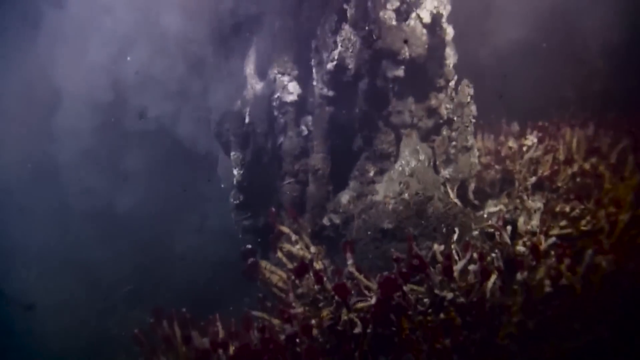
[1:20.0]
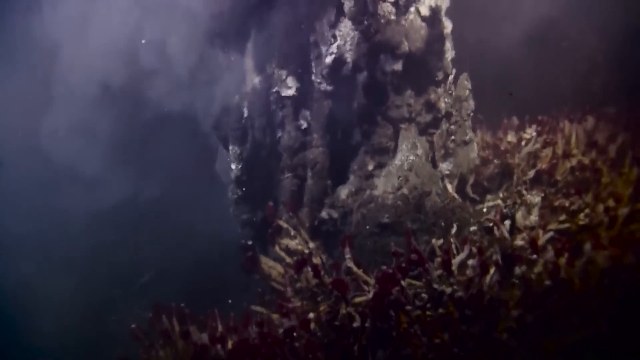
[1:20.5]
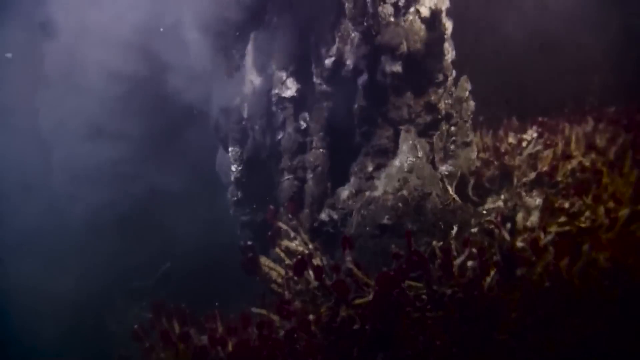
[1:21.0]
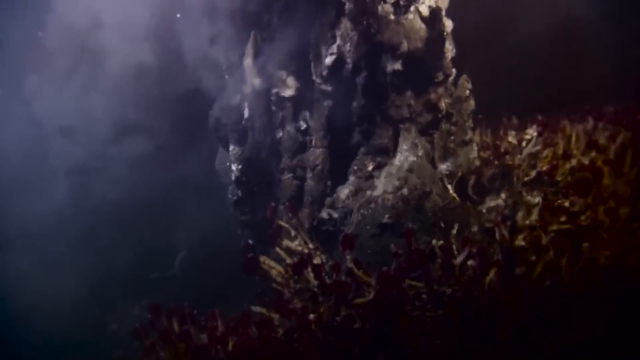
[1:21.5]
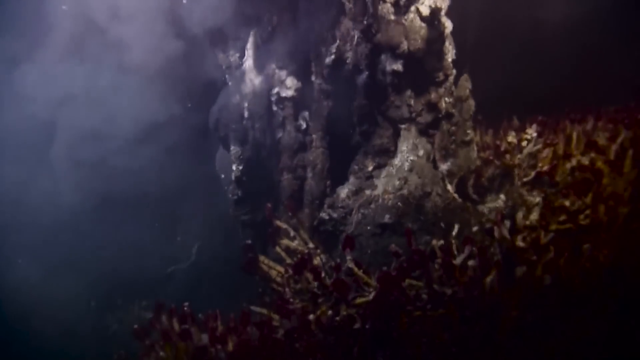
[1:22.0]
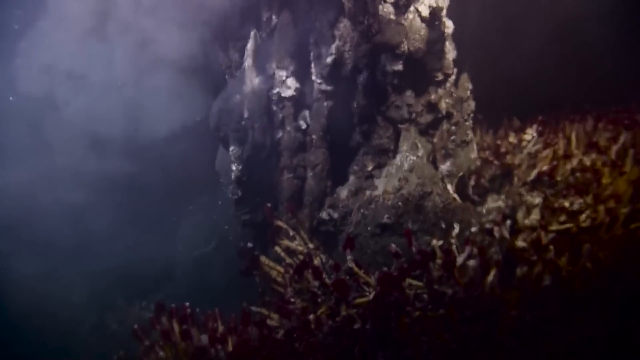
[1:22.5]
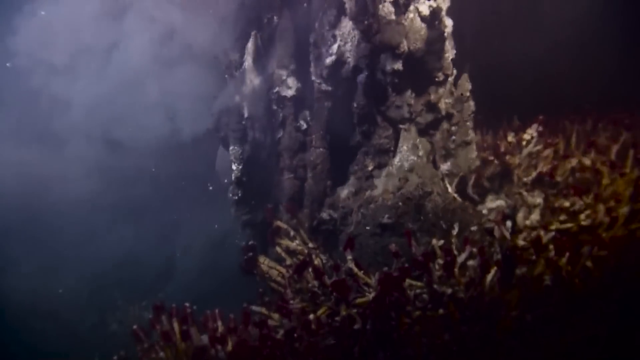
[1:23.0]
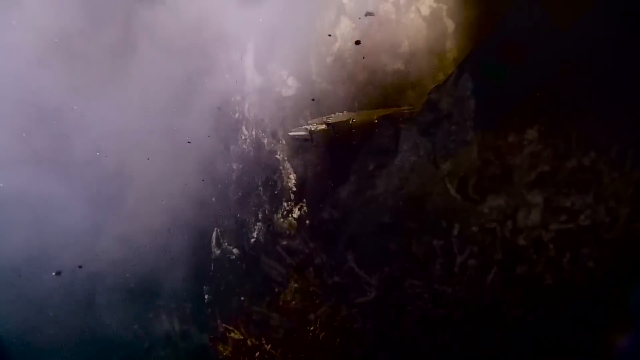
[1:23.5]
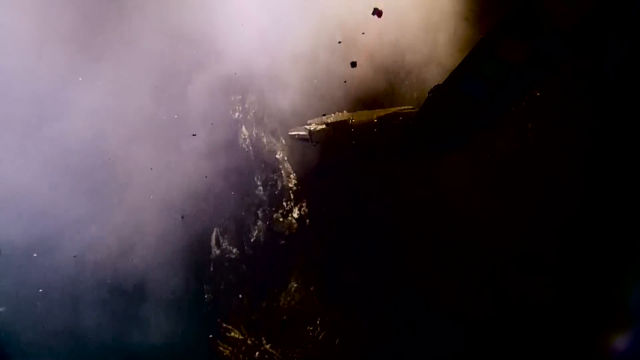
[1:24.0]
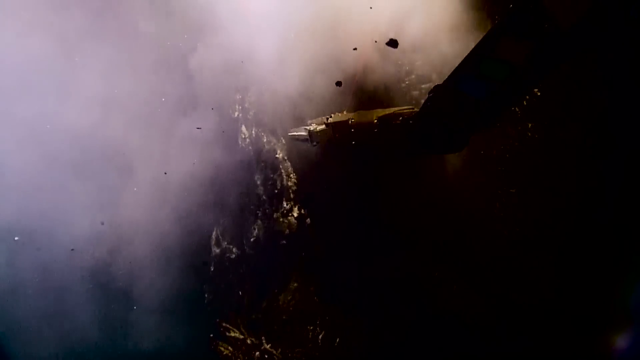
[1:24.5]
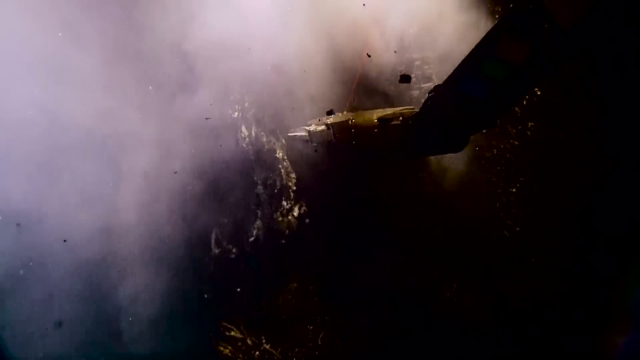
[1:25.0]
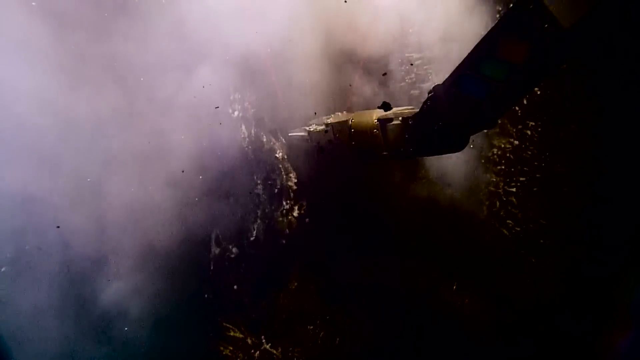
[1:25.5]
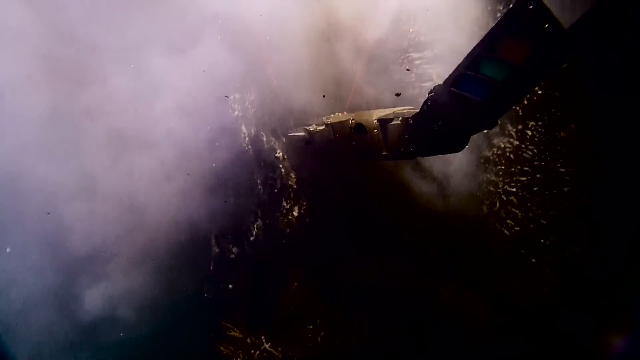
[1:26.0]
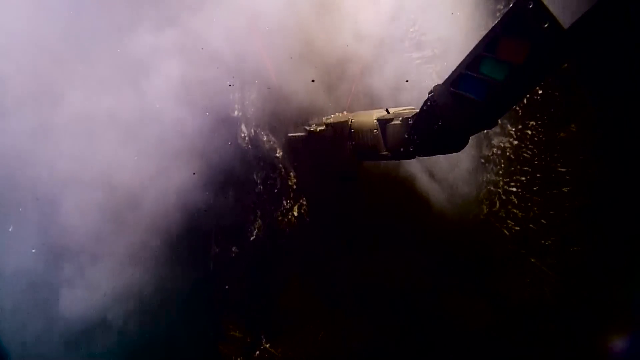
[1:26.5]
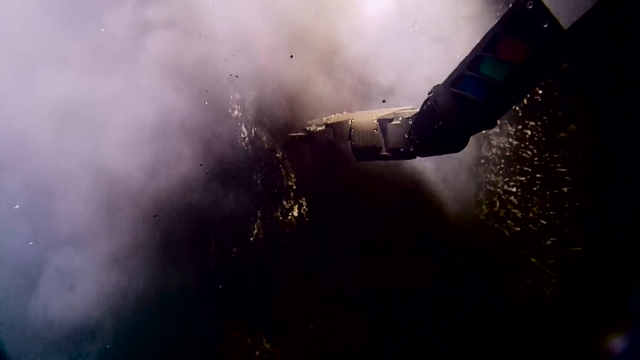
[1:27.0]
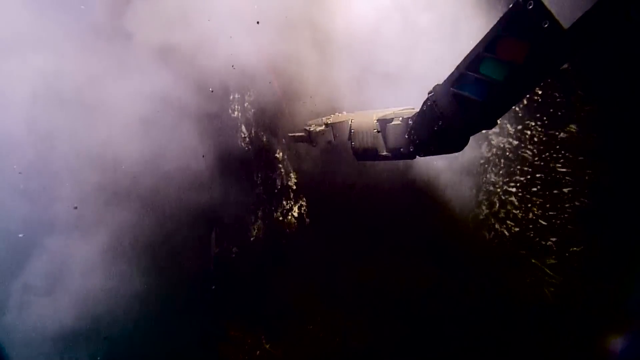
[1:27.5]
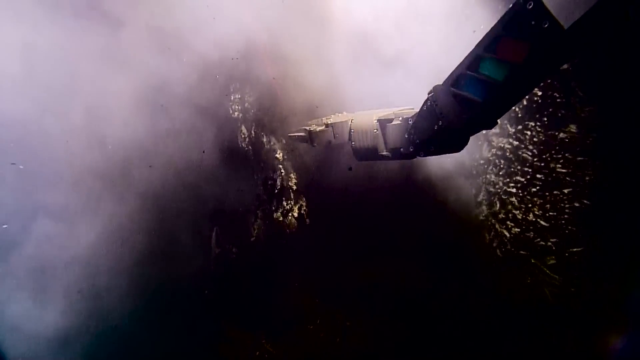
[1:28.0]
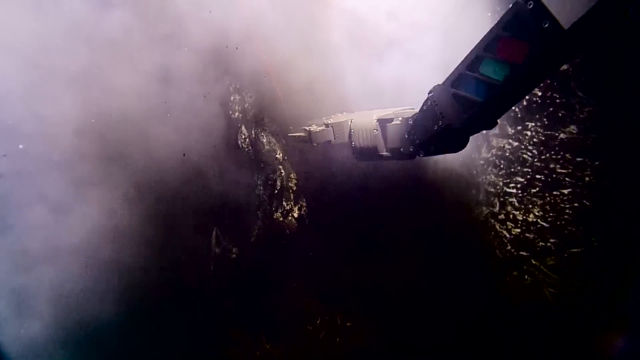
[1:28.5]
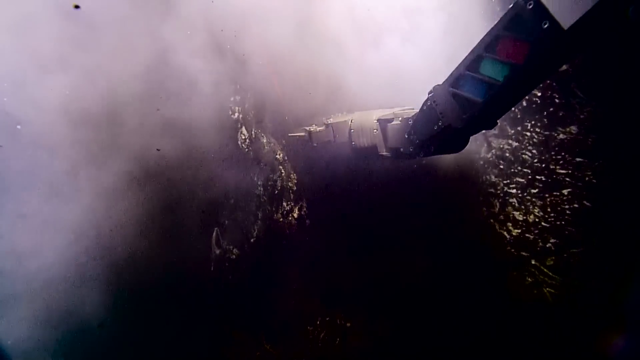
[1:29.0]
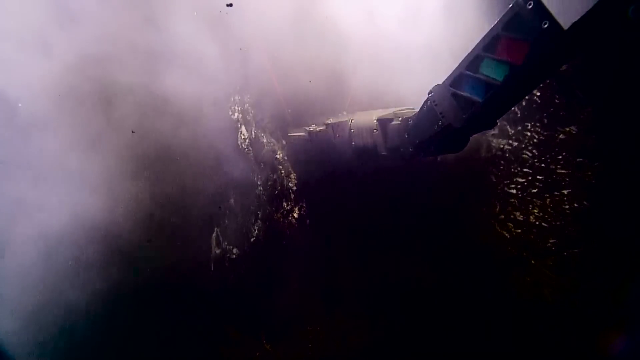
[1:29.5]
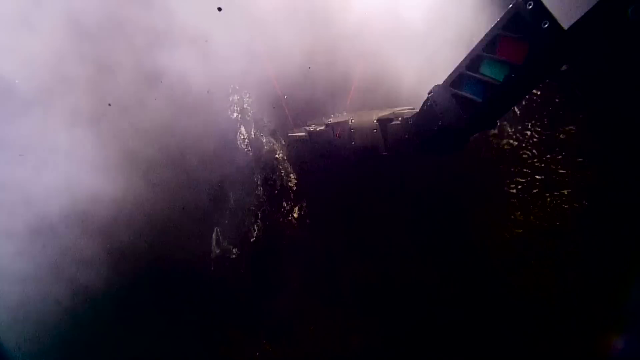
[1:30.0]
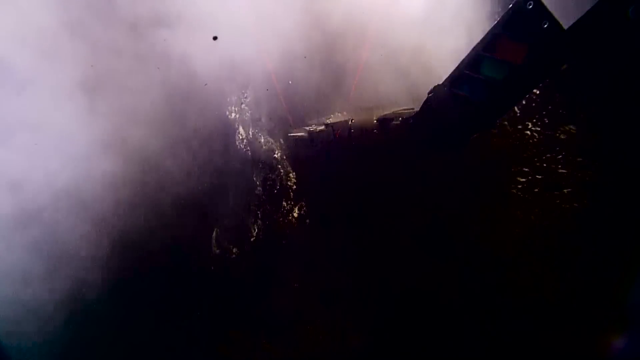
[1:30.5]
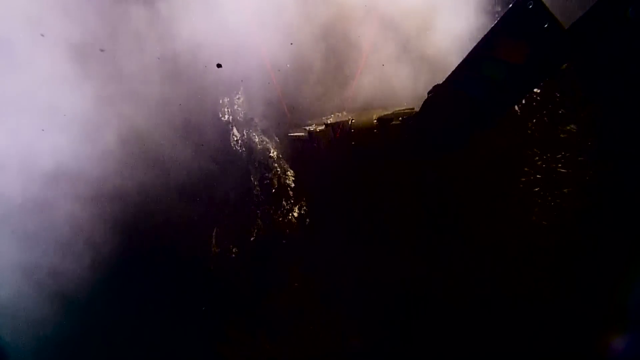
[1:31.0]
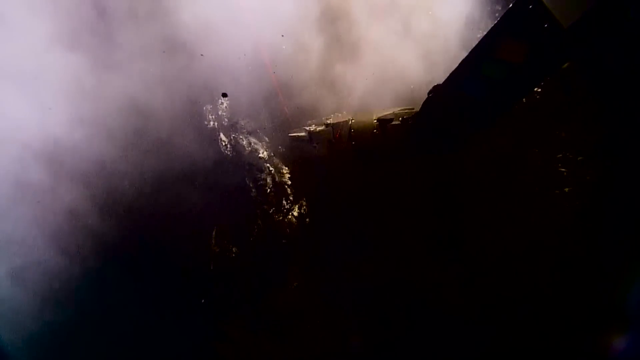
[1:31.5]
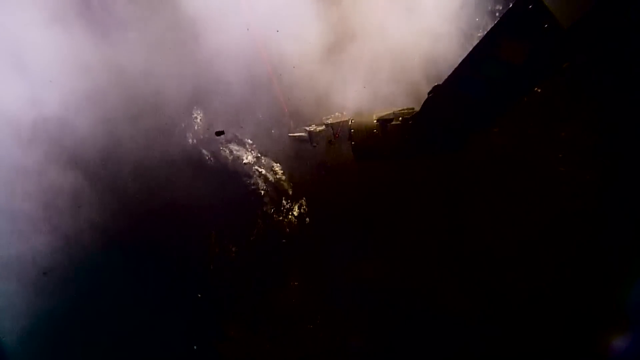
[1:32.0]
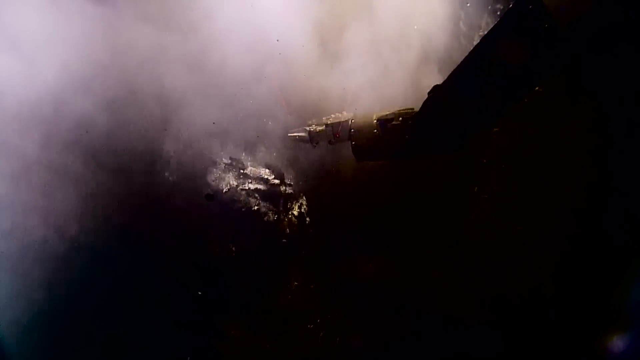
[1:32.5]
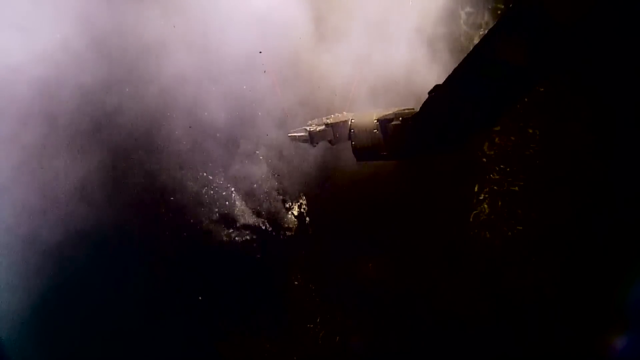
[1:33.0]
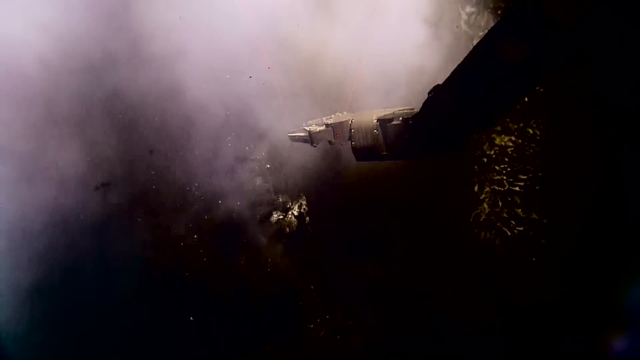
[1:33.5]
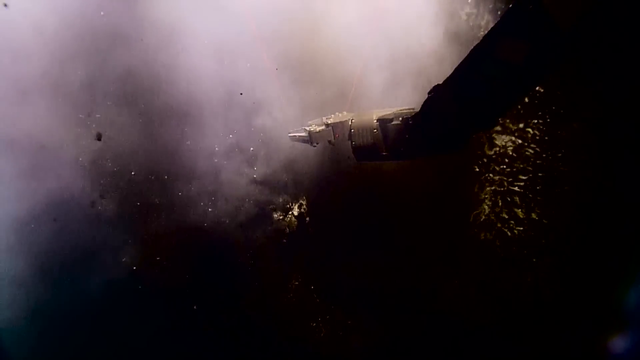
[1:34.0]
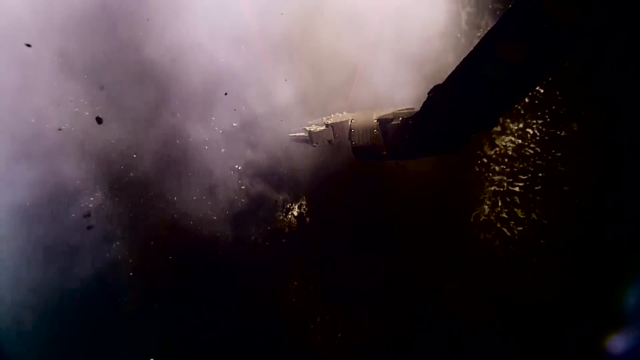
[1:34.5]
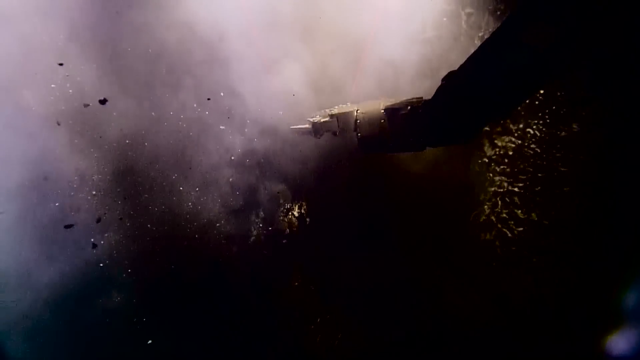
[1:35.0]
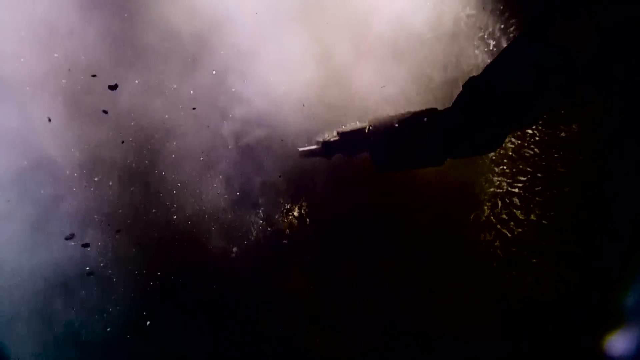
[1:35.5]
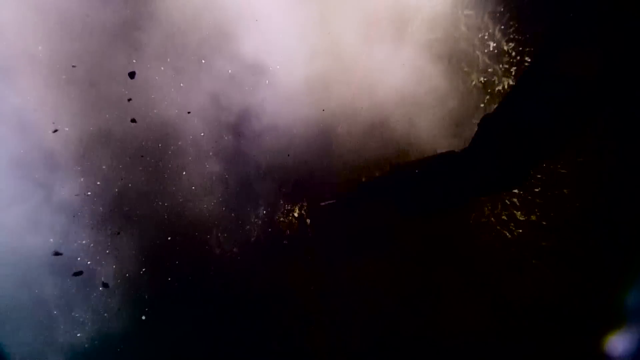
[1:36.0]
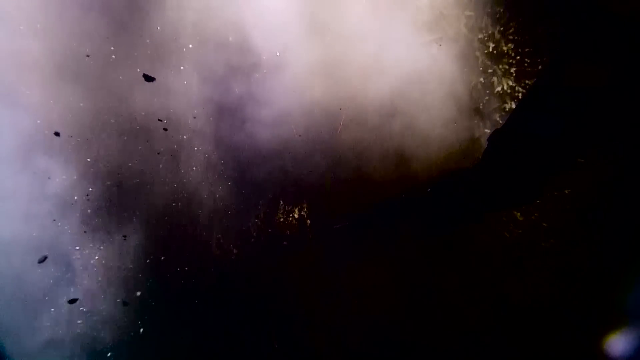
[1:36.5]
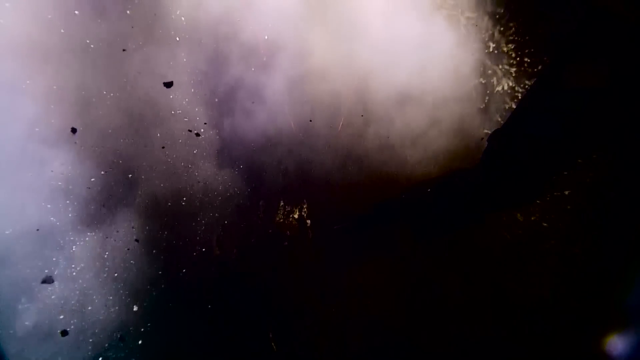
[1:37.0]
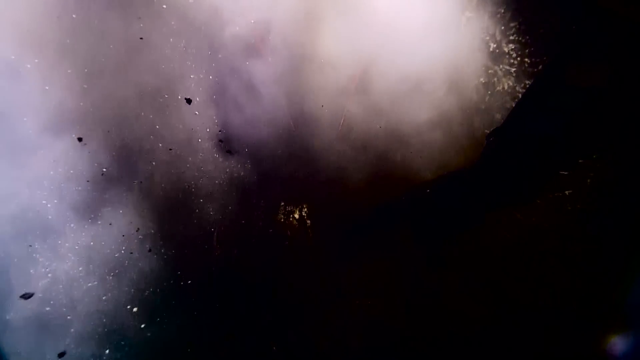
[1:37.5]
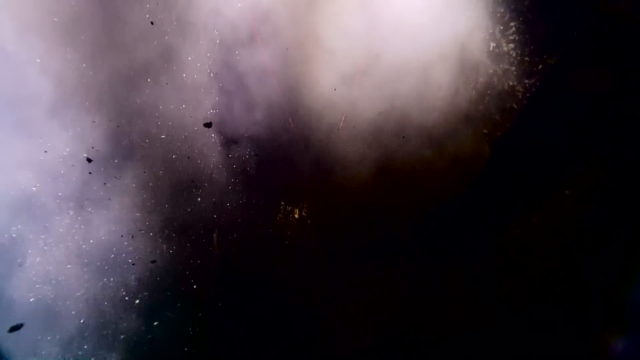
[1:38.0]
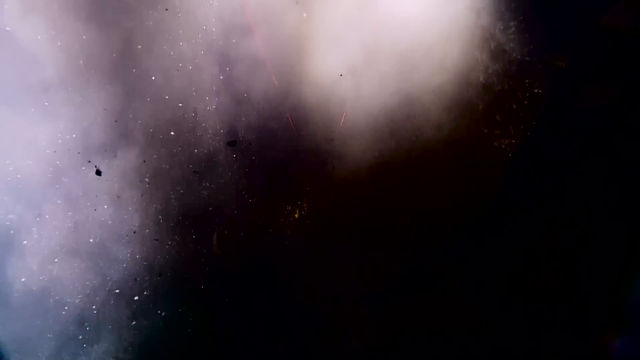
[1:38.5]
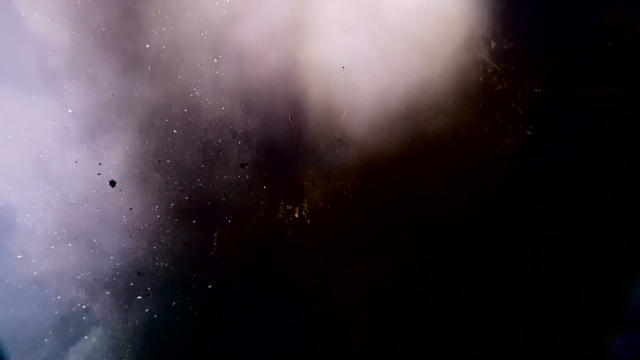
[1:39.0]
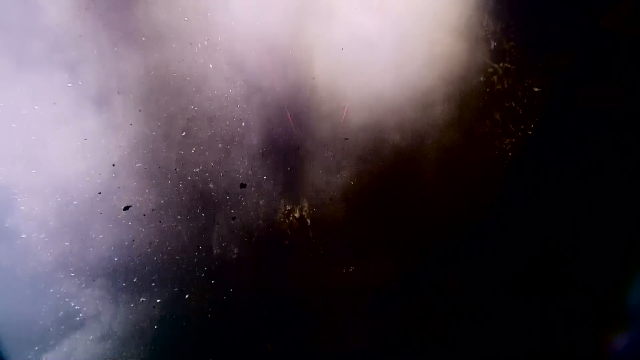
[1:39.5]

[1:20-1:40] The visuals look blurry deep underwater, where there is yellow and red coral, and in the middle a huge rock that looks rusty with silver mold. On the left is what looks like smoke or a lot of dust under water. A little more smoke and some more rocks appear, along with an object that looks like a machine, silver and black, with three lights that are blue, green and red, and what looks like a robot hand. The rock then falls or breaks apart, and white and black particles of the rock float in the water. More smoke appears, and the hand of what looks like a machine moves down.